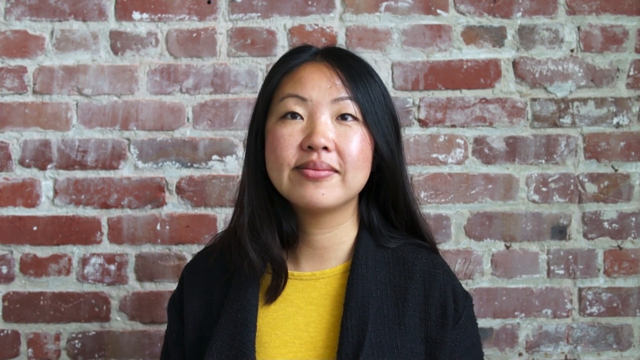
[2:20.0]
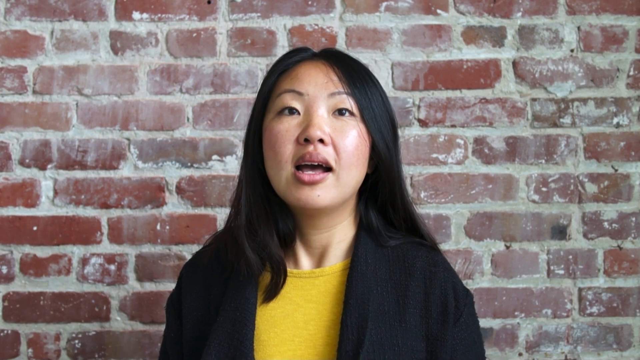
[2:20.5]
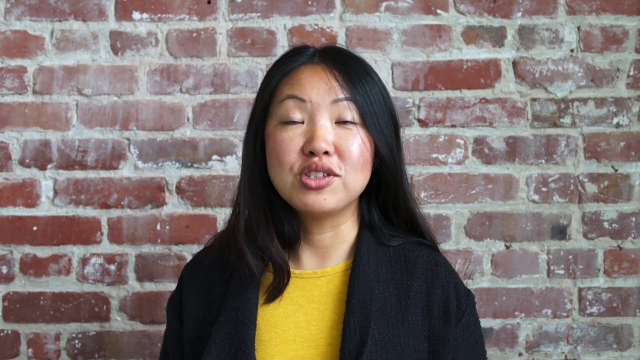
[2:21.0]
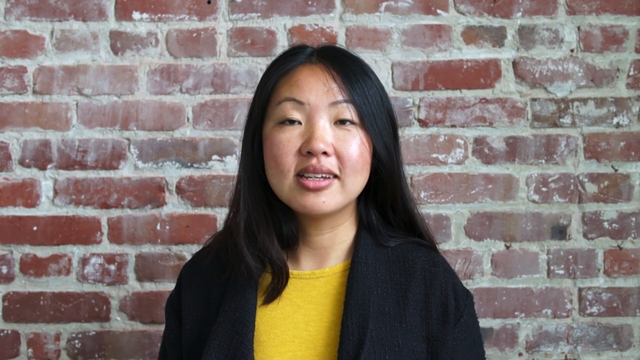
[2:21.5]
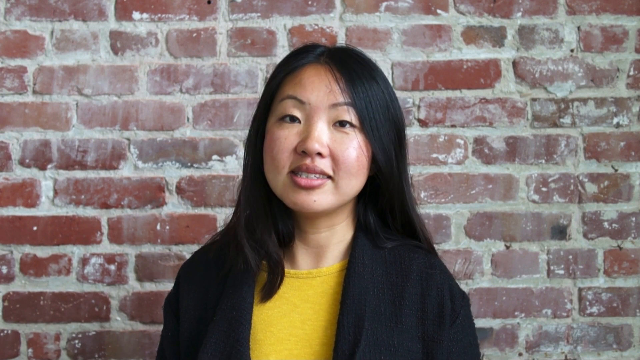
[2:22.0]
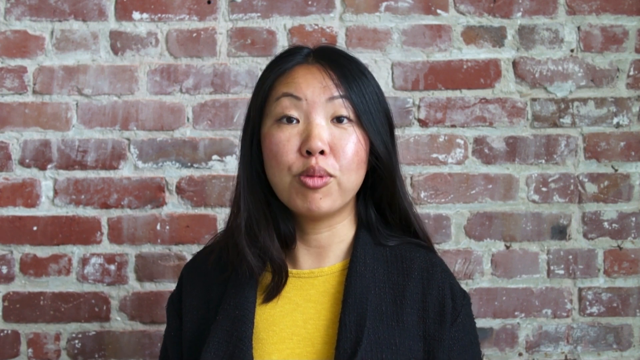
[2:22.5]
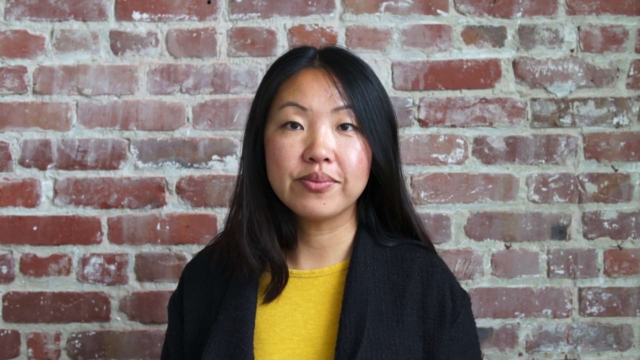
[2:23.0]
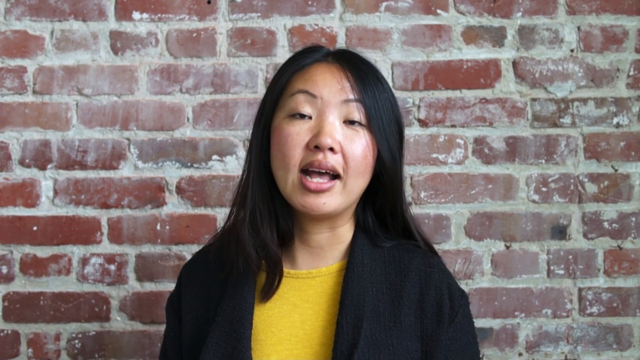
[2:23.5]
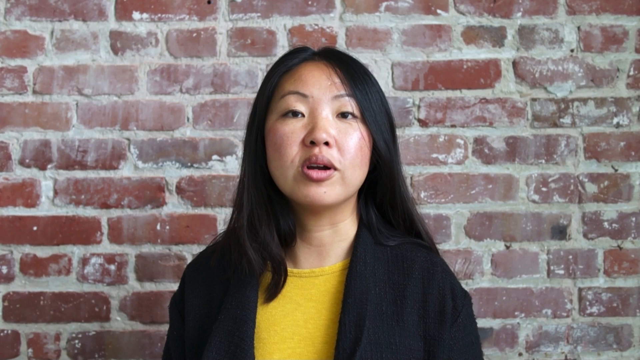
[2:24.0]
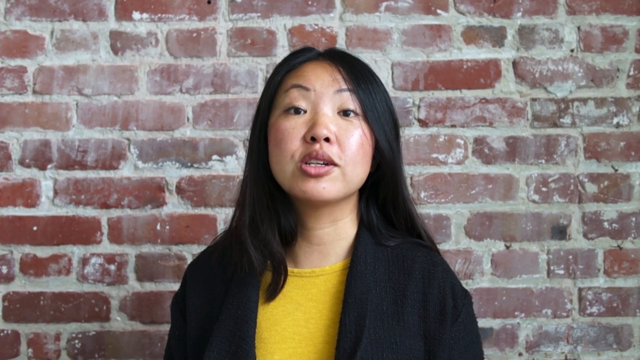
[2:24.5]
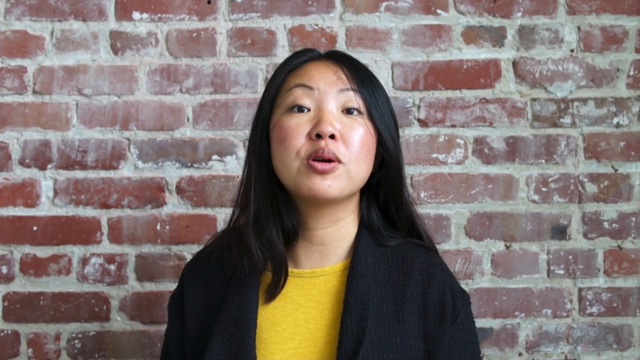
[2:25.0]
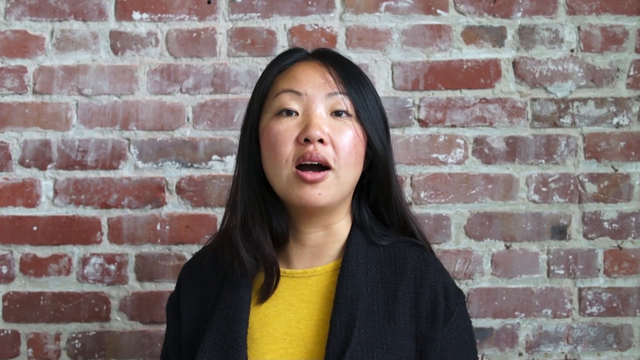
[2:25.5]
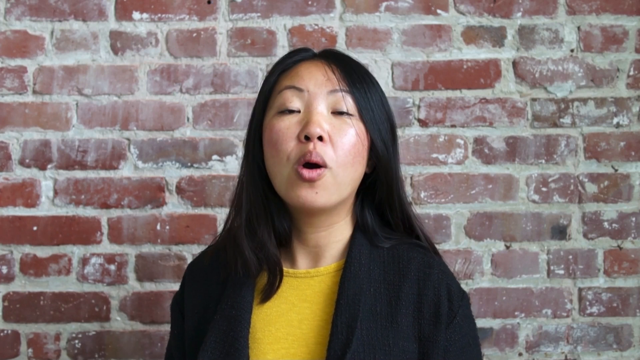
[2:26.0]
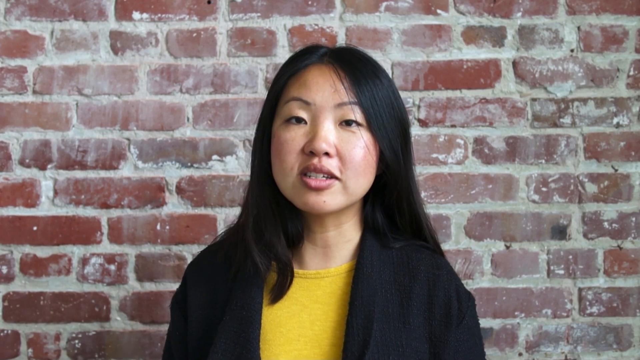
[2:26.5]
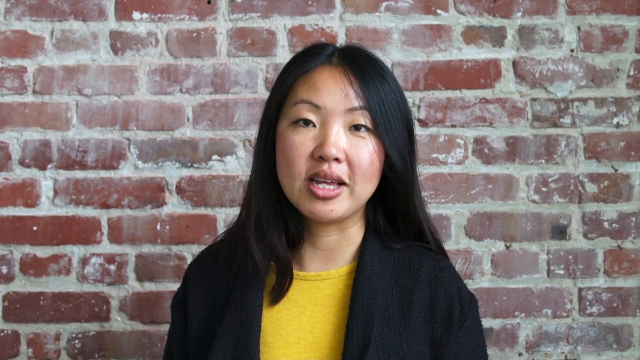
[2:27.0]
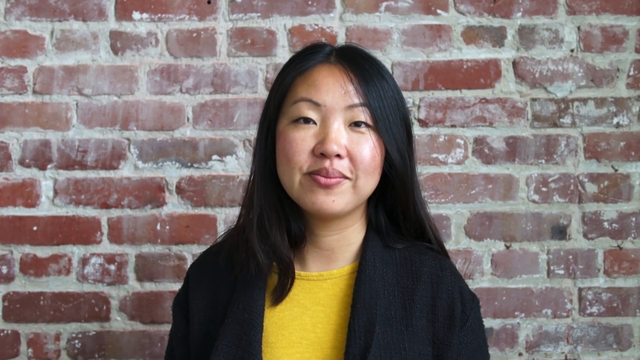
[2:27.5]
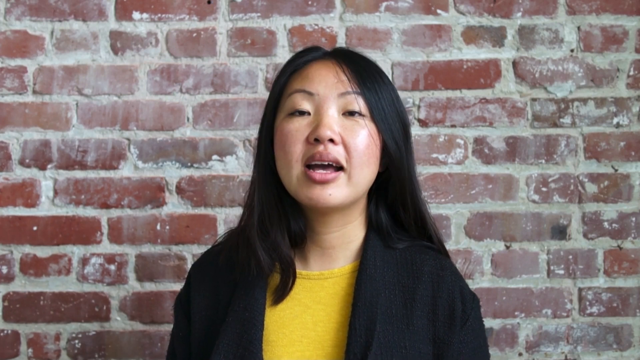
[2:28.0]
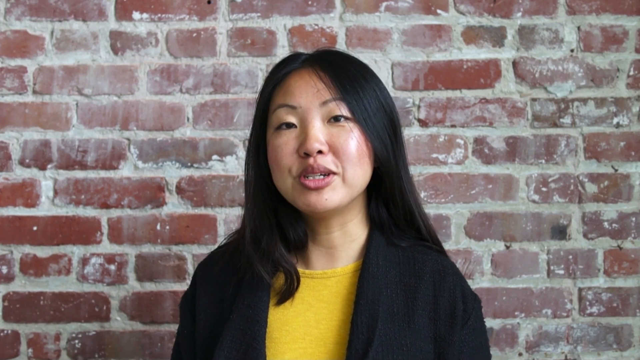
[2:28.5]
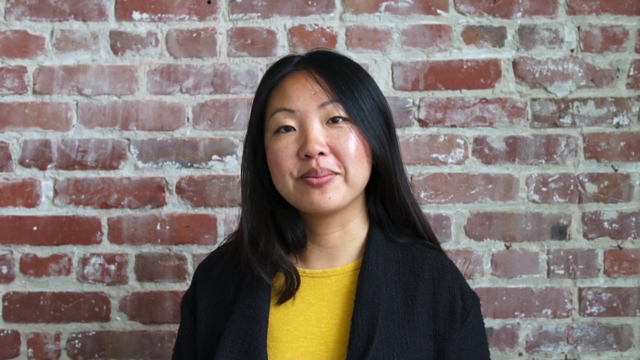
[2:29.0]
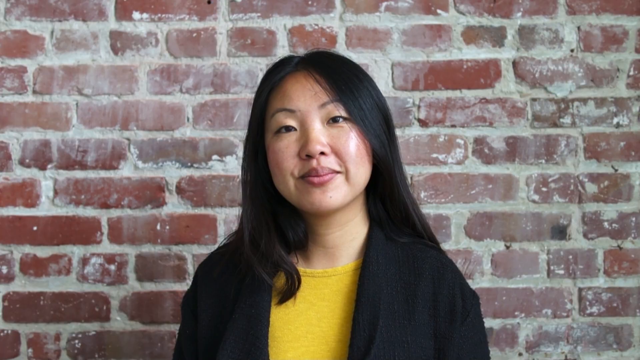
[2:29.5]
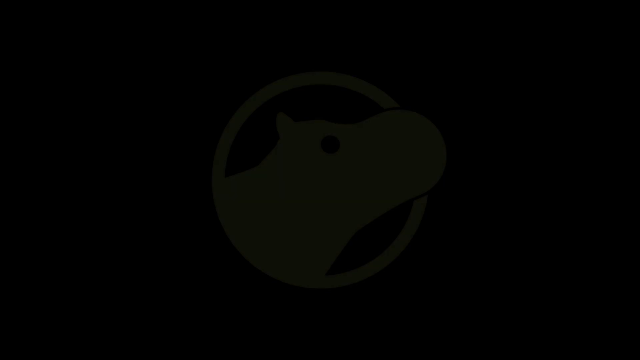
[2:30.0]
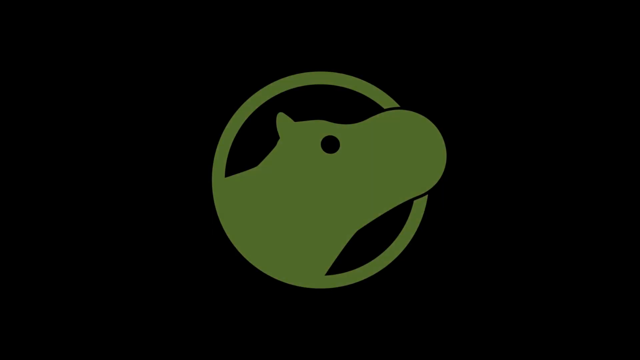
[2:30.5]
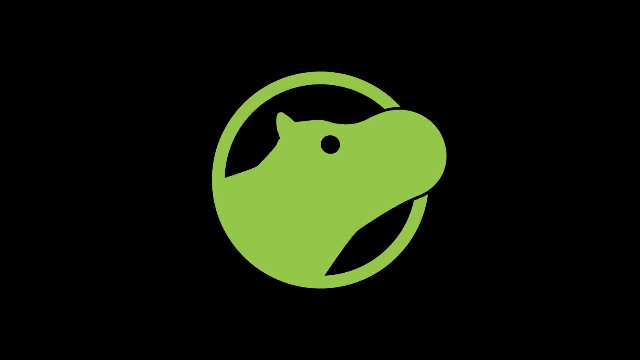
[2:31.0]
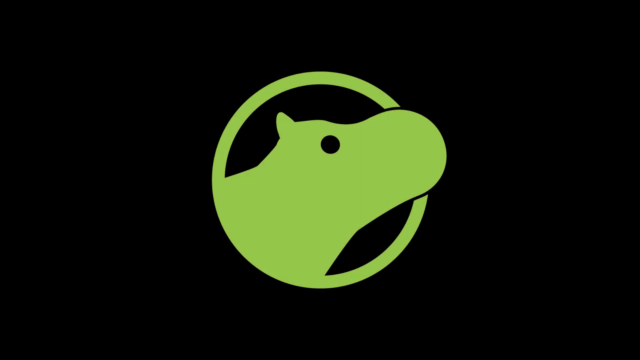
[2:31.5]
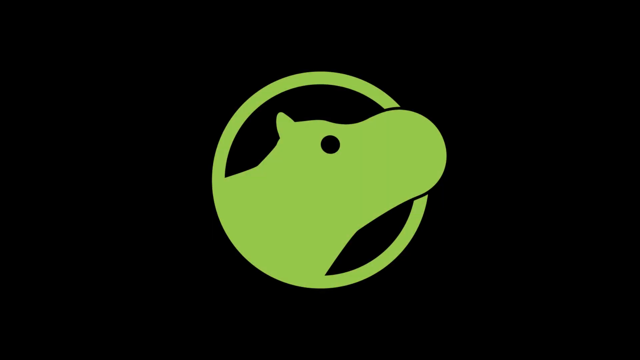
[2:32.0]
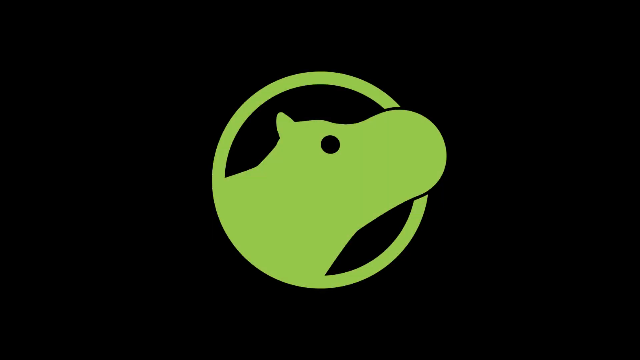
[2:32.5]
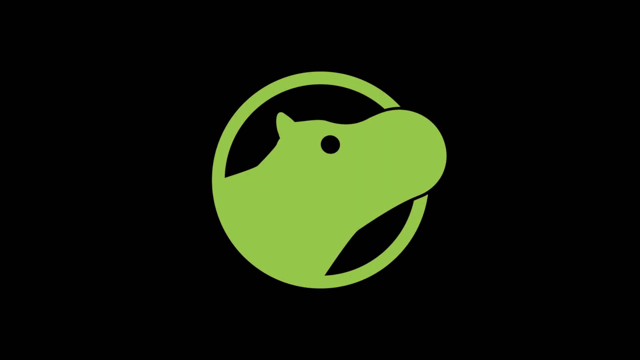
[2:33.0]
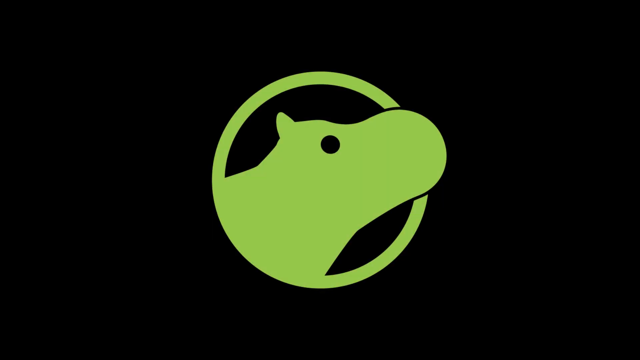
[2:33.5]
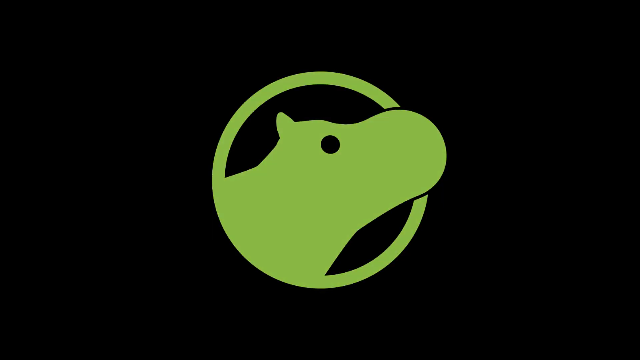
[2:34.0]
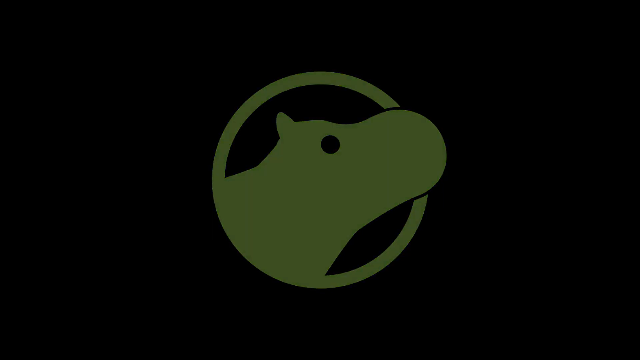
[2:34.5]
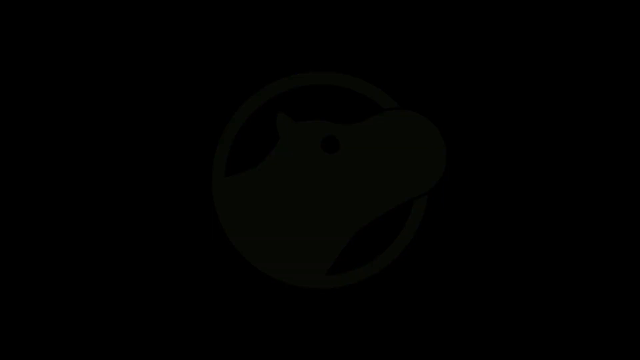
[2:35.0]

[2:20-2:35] The young Asian woman, with straight black hair, a round face and slanted eyes, wears a black jacket and a yellow shirt in front of a brick wall smeared with chalk or concrete dust. She talks excitedly. The scene then changes to a big green hippo face inside a circle. She says, "Flippo always supports you."